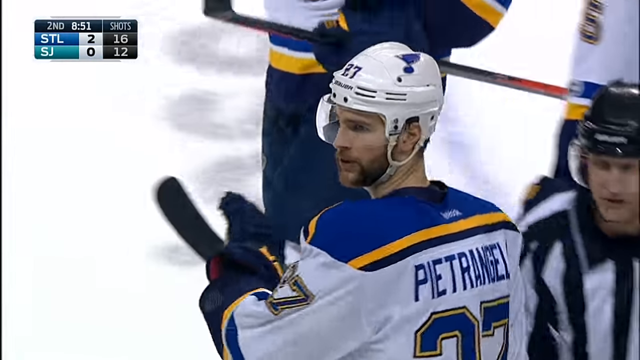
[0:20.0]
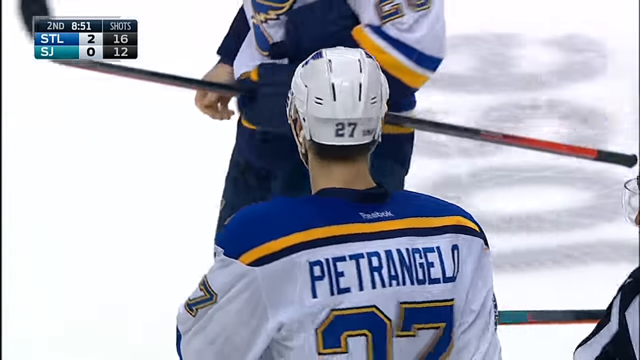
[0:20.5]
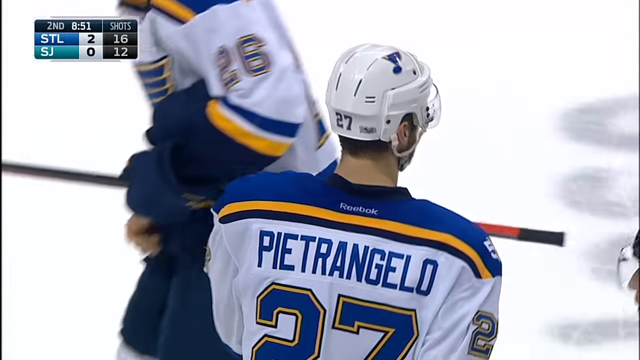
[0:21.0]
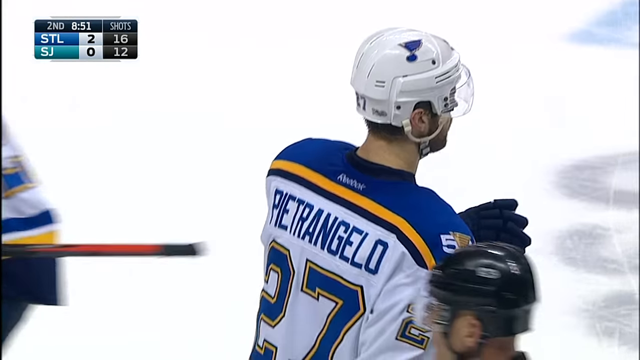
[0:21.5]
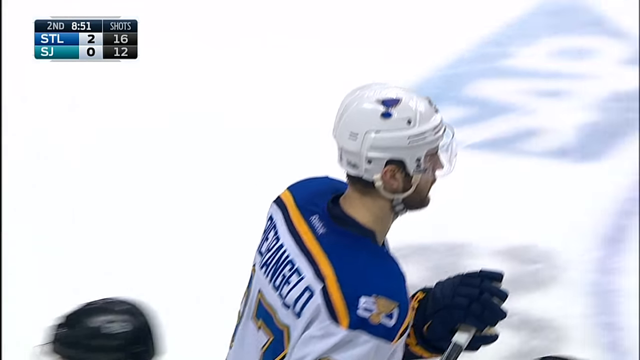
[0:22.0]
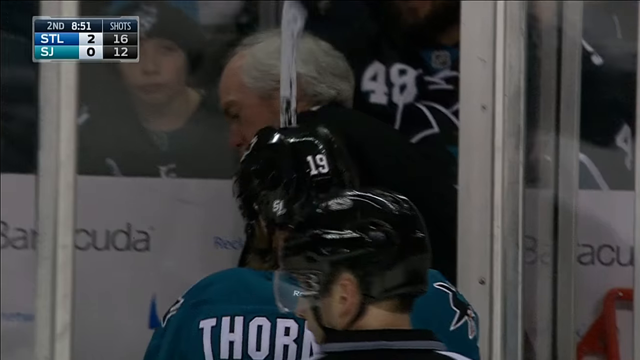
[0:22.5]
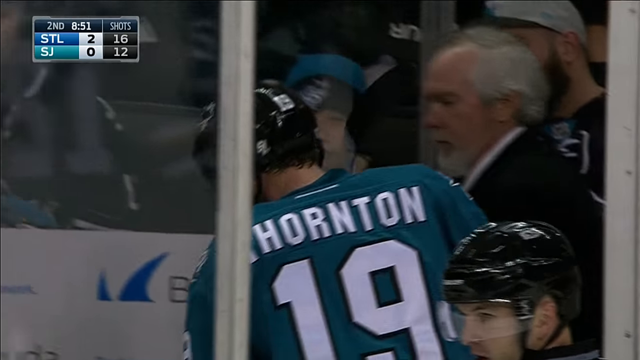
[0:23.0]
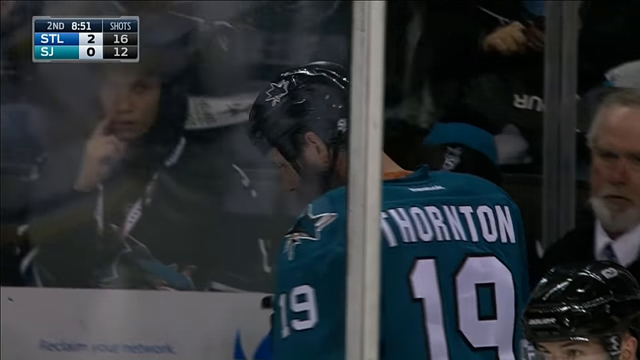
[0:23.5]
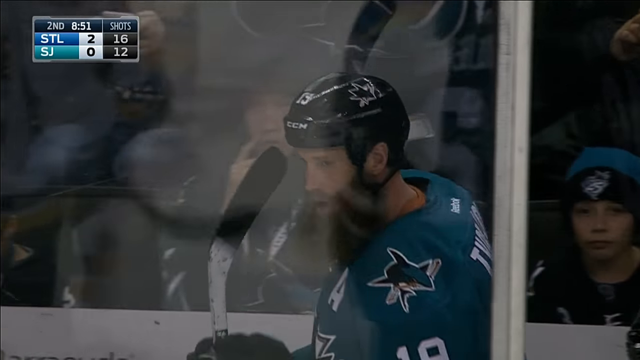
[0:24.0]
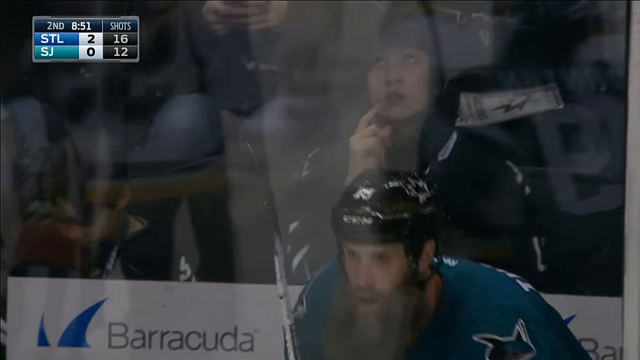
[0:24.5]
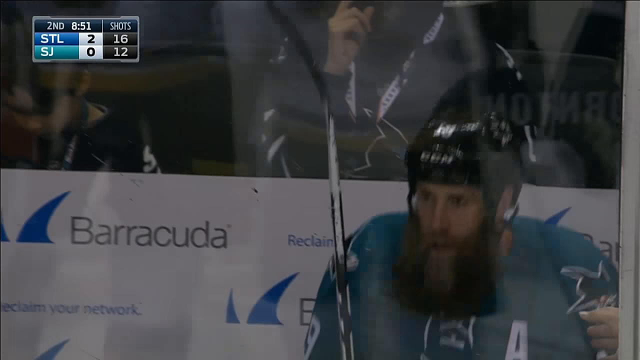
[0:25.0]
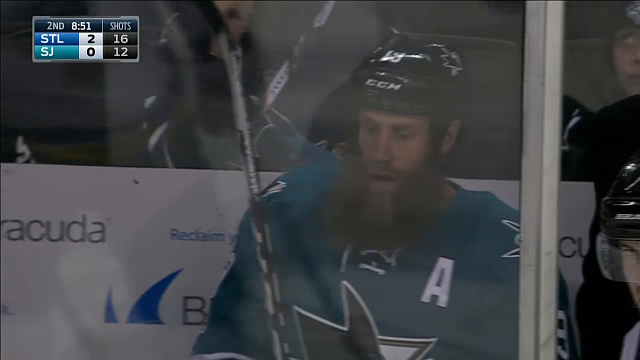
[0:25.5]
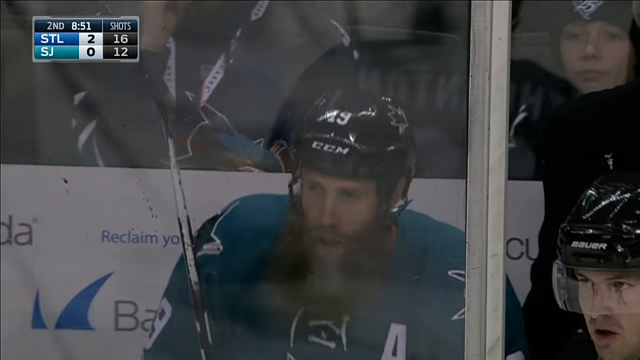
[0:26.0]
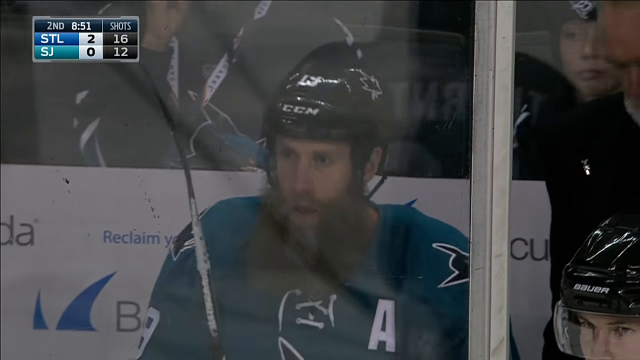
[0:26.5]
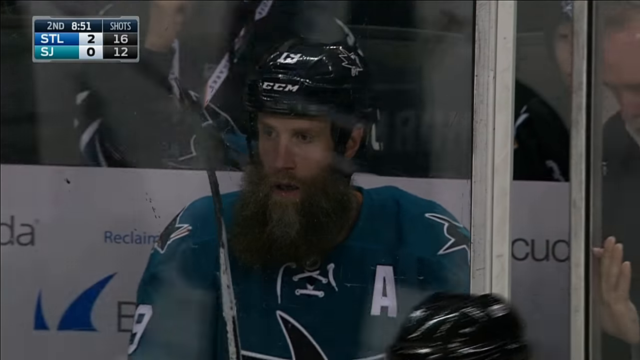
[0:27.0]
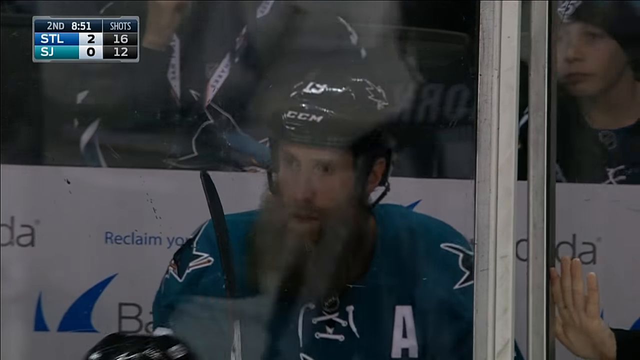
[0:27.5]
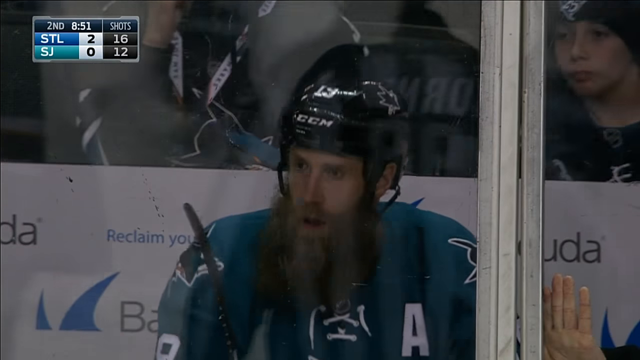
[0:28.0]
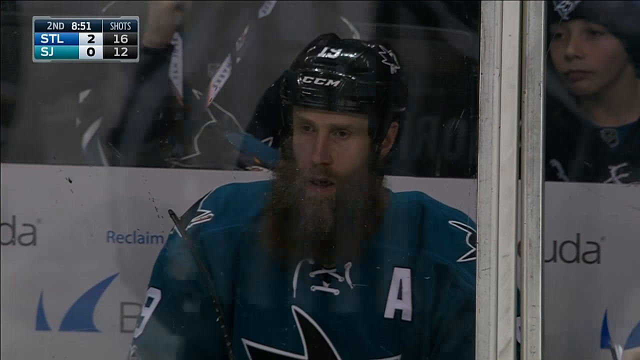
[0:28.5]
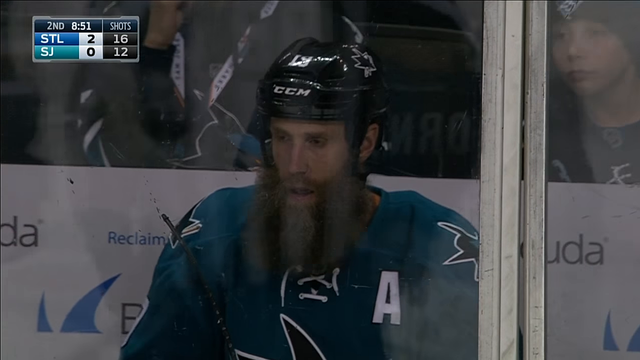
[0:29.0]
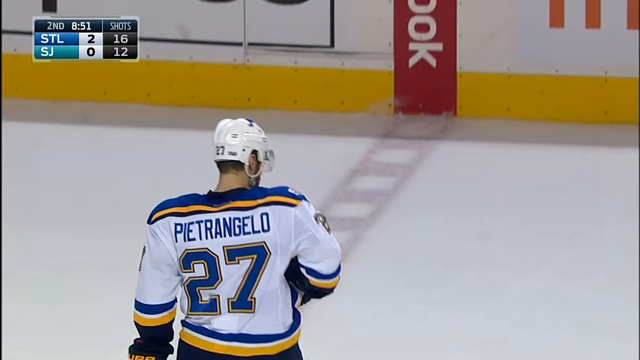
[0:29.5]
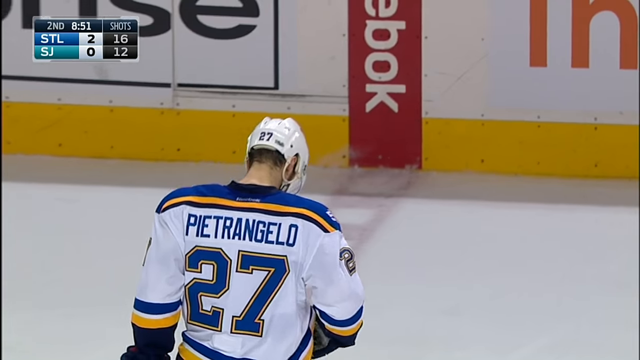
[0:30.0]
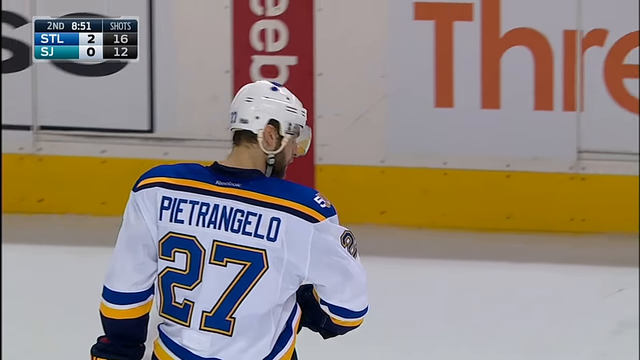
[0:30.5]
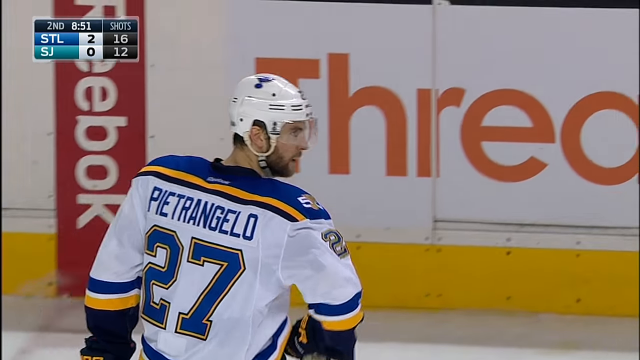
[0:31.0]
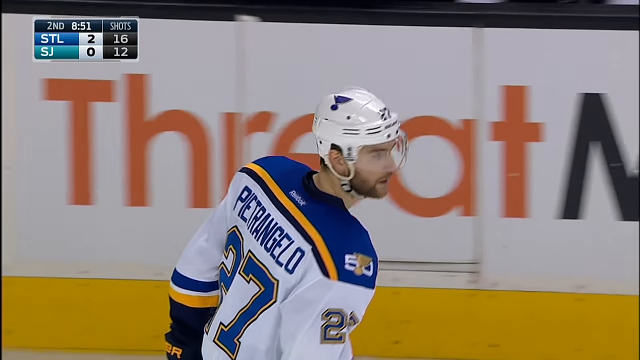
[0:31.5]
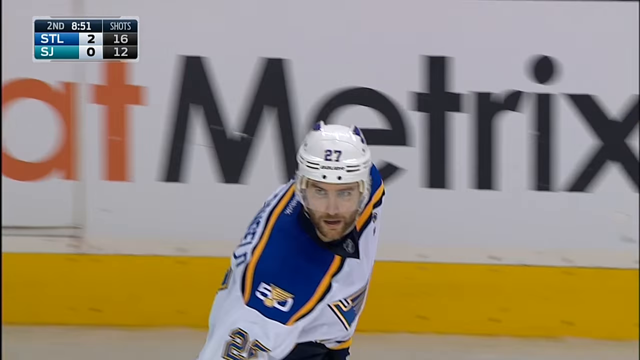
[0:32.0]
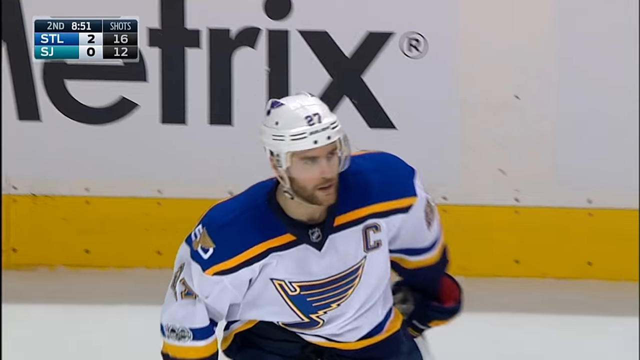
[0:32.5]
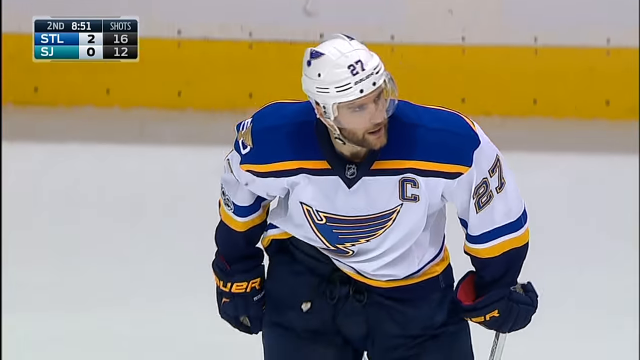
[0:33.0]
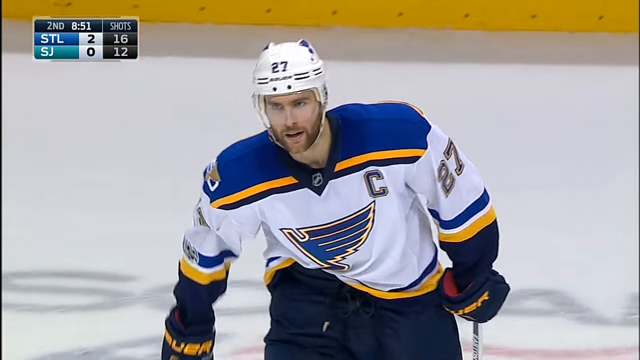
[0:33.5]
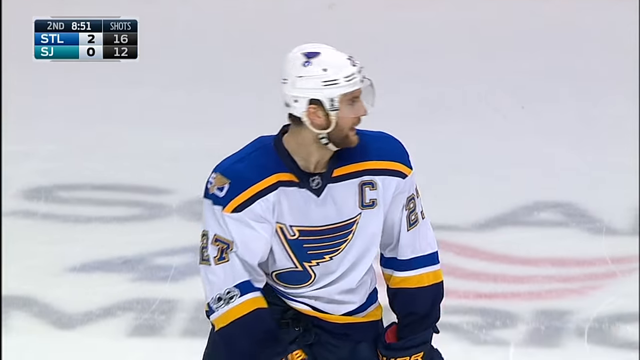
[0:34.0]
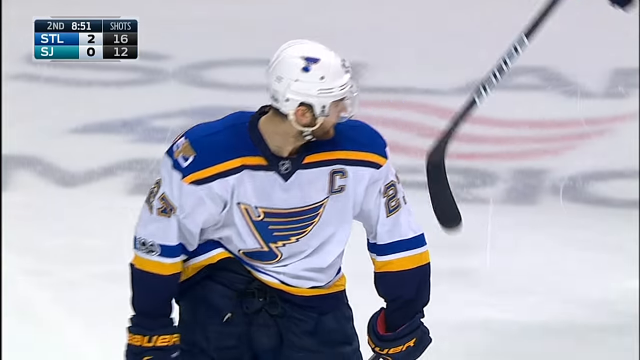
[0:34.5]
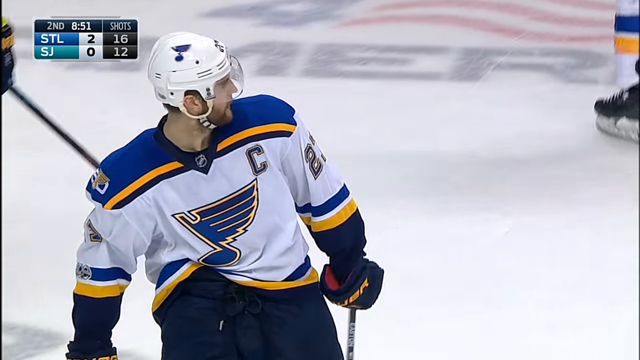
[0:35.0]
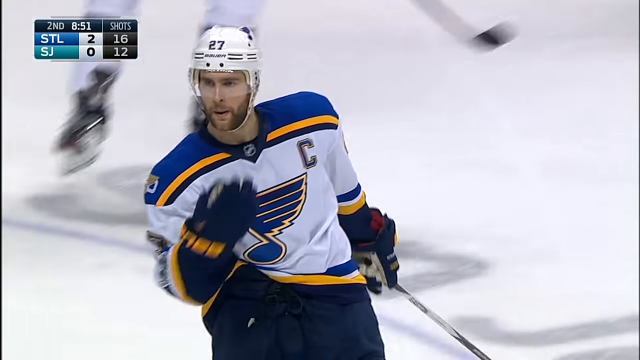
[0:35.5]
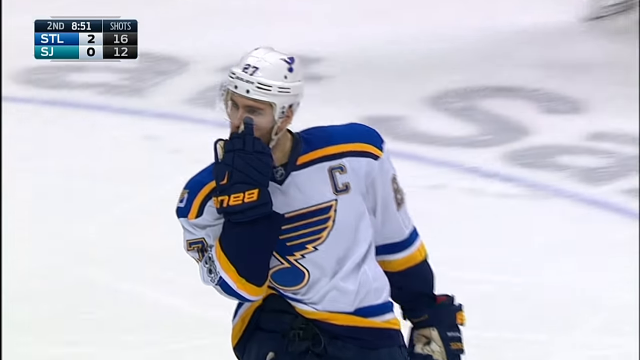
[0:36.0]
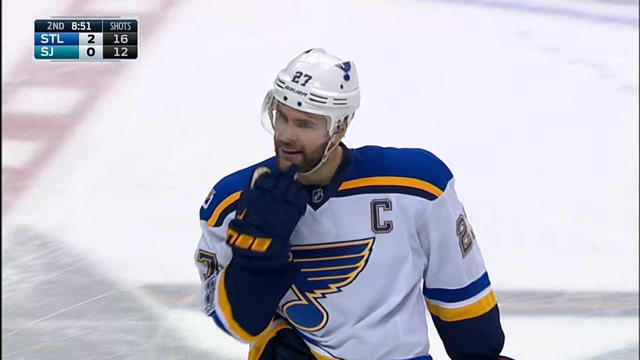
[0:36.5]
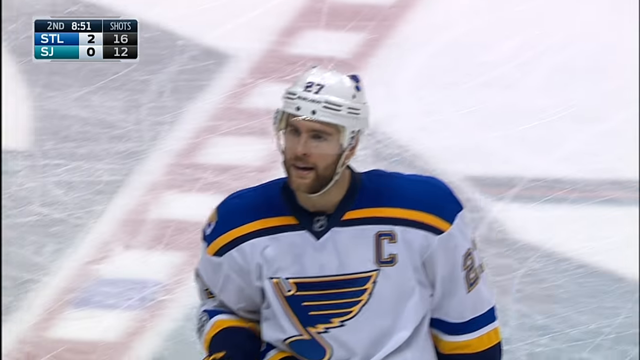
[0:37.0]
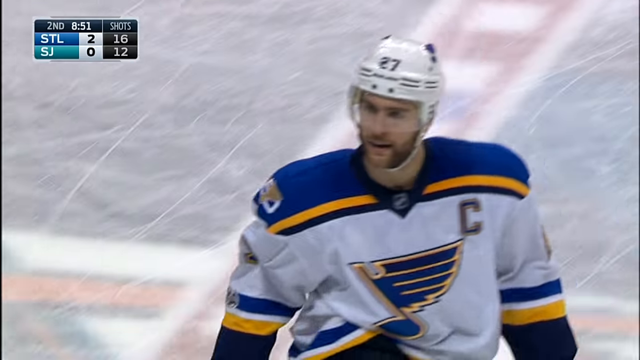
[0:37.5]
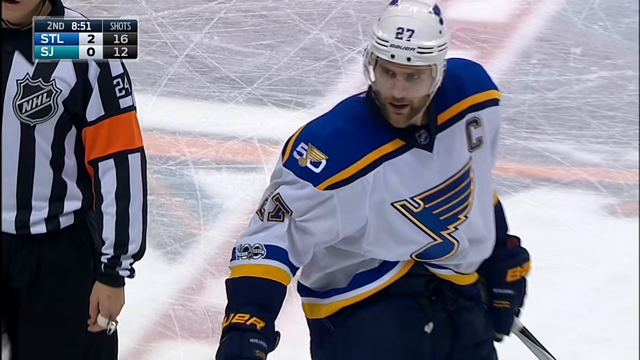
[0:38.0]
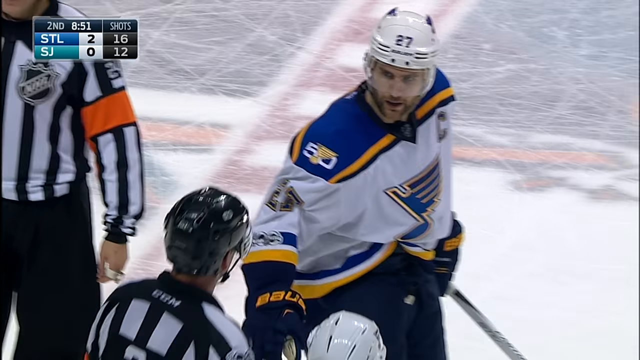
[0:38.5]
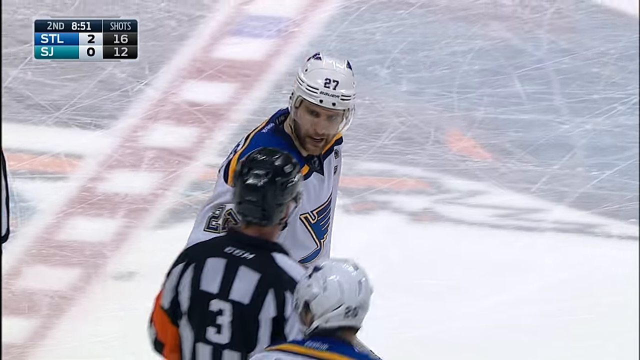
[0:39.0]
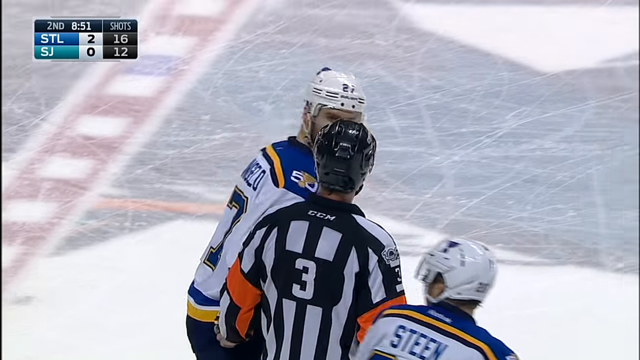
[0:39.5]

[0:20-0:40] Ice hockey players skate around the rink: one team is in teal and the other in blue, white and gold. The white and blue team wears white helmets, while the teal team is in teal, black and white with black helmets. There are two referees, one of whom has the number 3 on his back. A sign for Threat Metrics is along the wall. A scoreboard in the top left corner of the screen shows STL with two points and SJ with zero; the teal team has zero and the blue team has two, and they are in the second quarter. One player has "Thornton" on his back and is number 13. One of the players on the white and blue team is number 87.